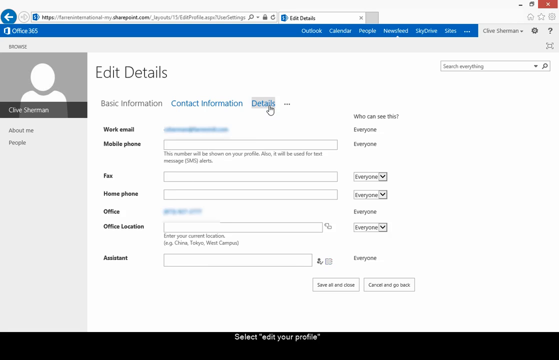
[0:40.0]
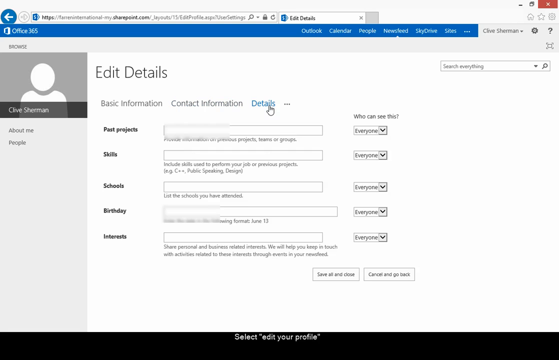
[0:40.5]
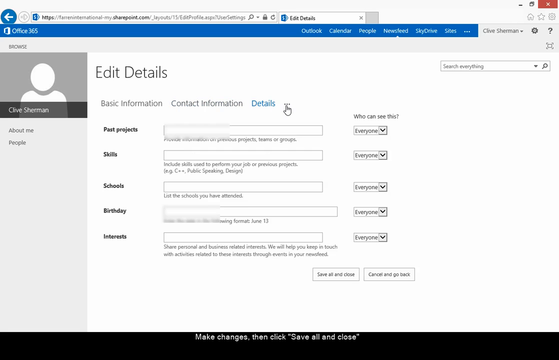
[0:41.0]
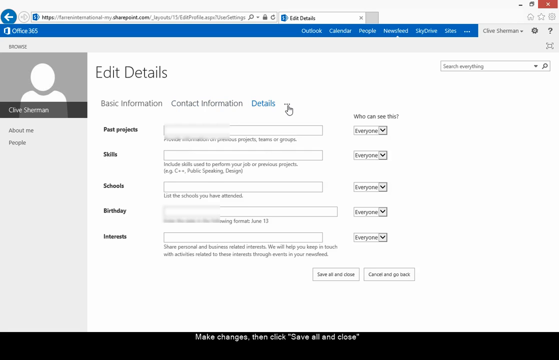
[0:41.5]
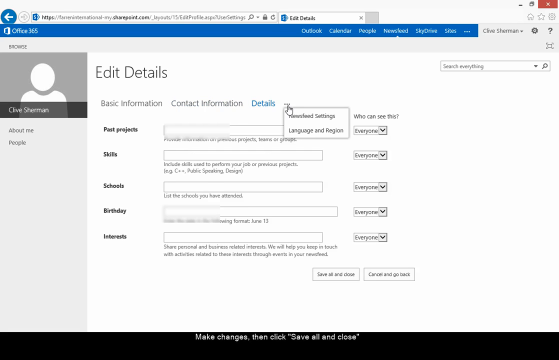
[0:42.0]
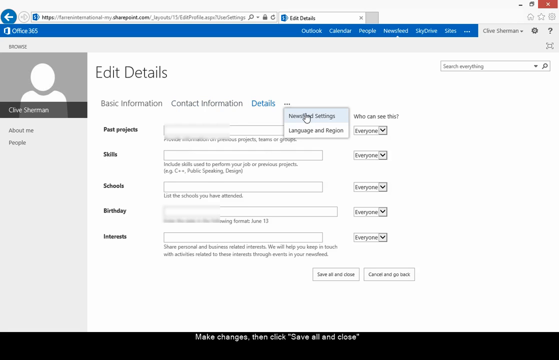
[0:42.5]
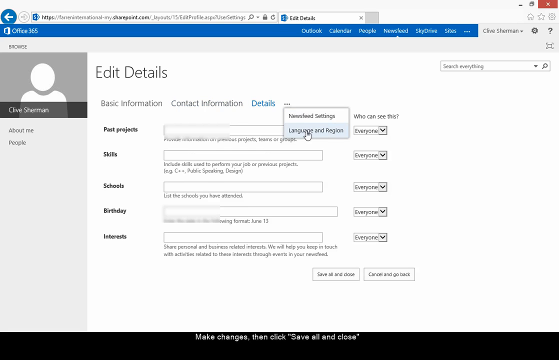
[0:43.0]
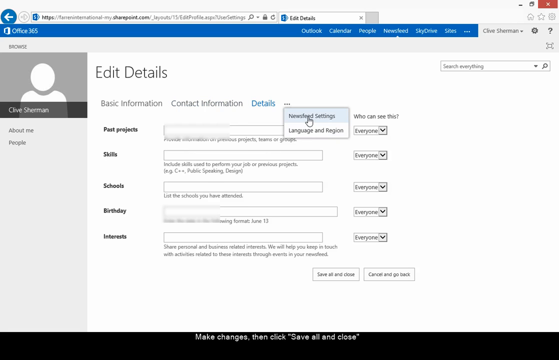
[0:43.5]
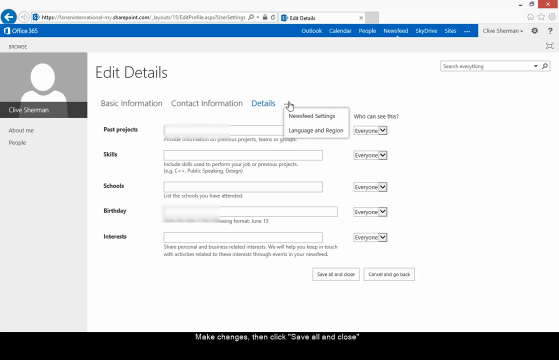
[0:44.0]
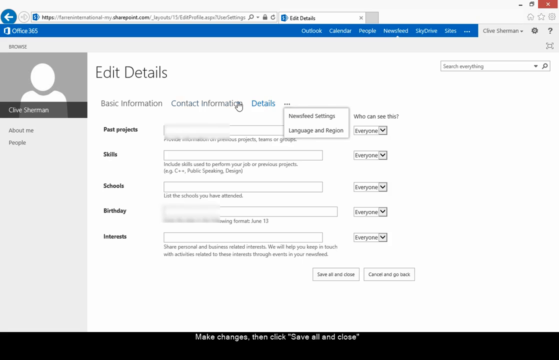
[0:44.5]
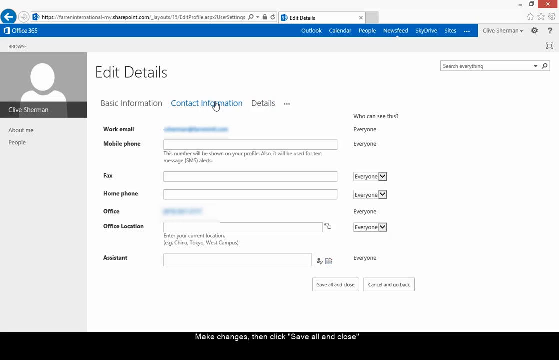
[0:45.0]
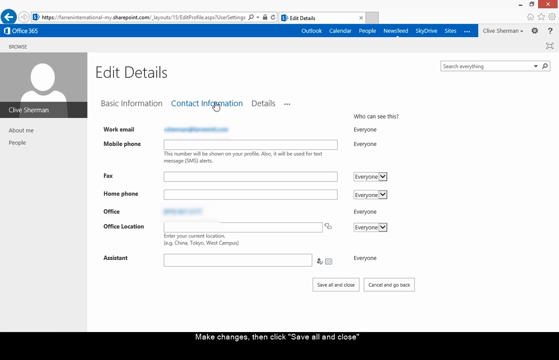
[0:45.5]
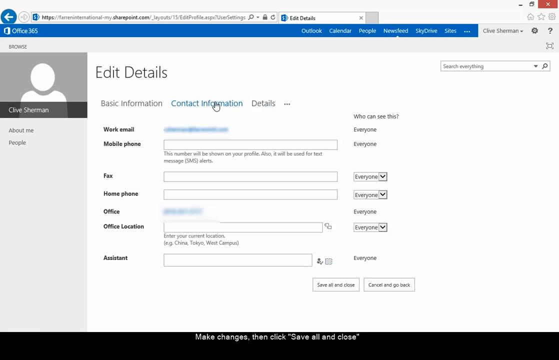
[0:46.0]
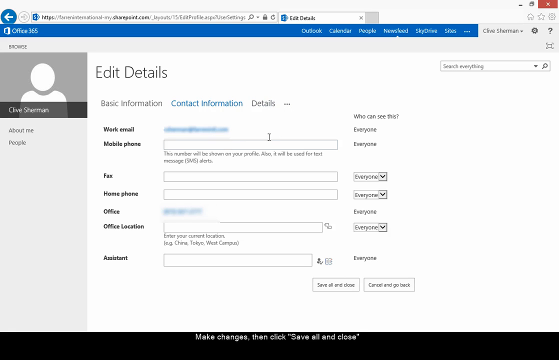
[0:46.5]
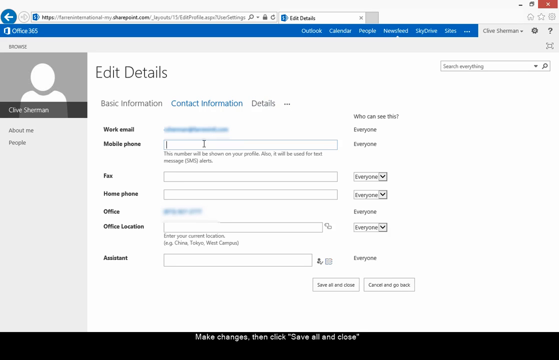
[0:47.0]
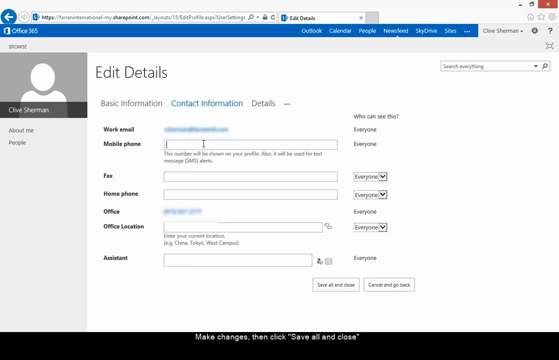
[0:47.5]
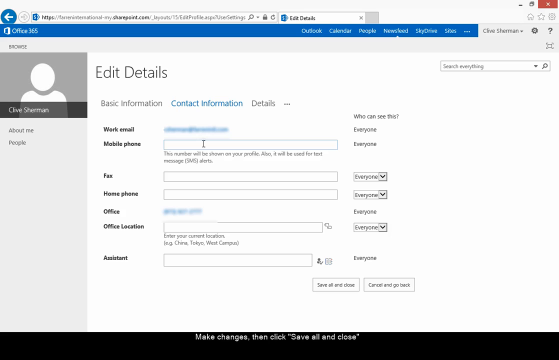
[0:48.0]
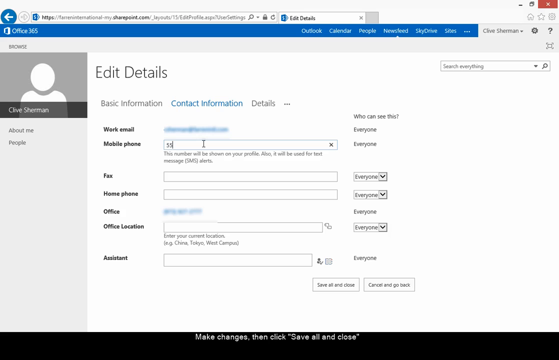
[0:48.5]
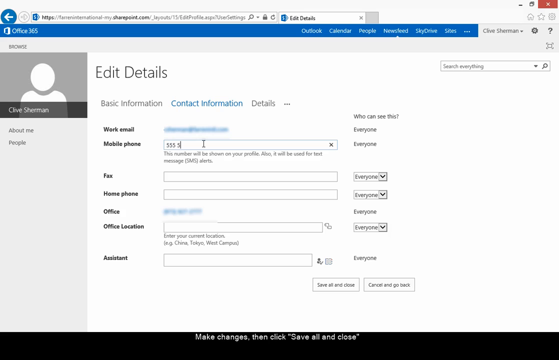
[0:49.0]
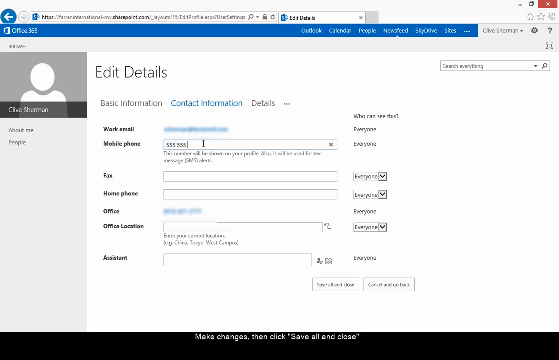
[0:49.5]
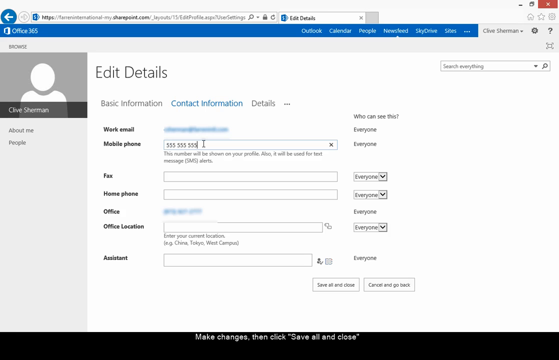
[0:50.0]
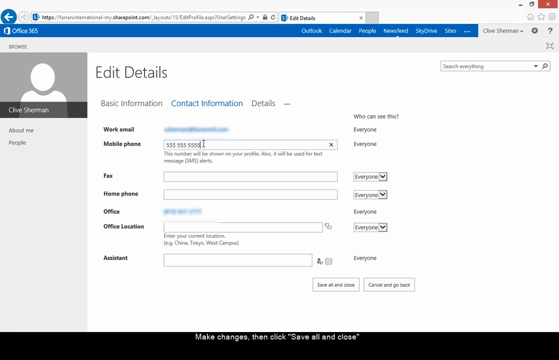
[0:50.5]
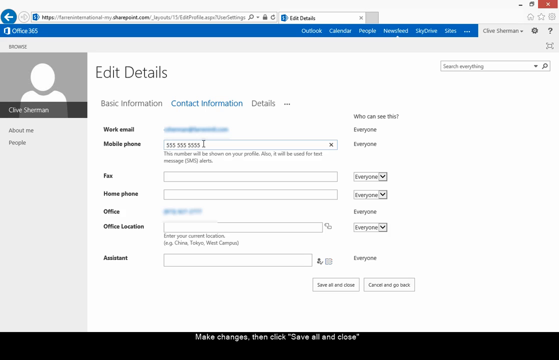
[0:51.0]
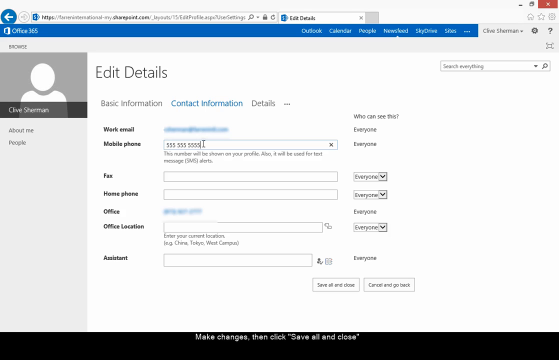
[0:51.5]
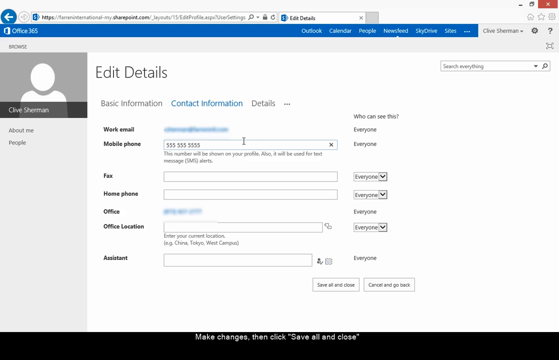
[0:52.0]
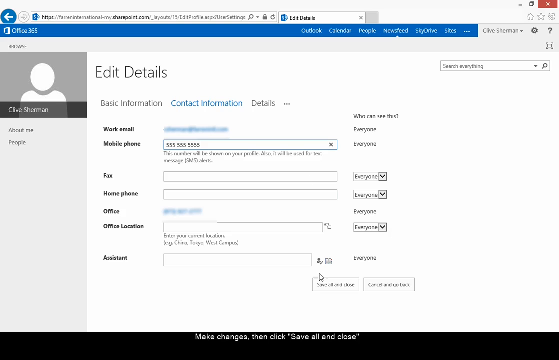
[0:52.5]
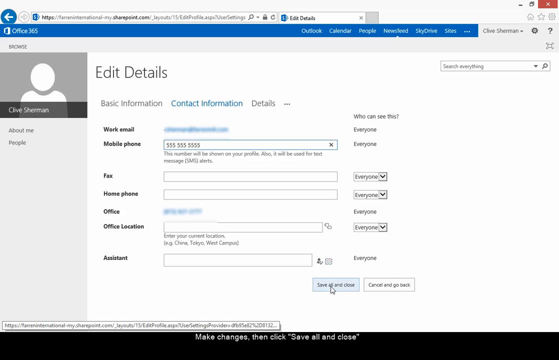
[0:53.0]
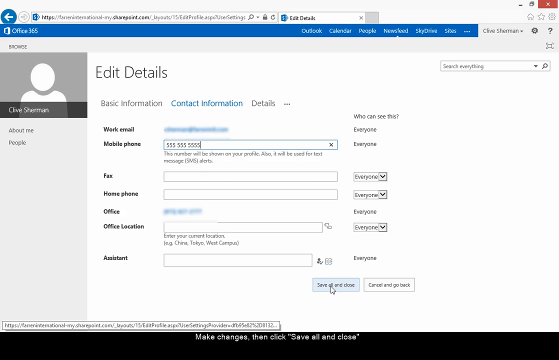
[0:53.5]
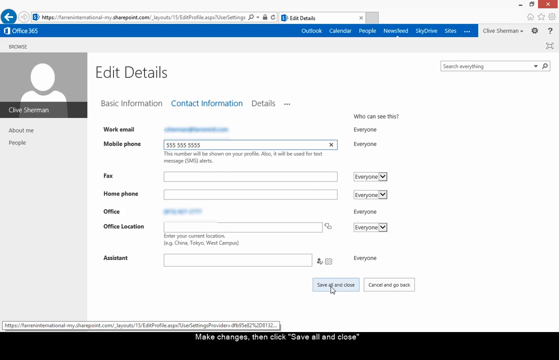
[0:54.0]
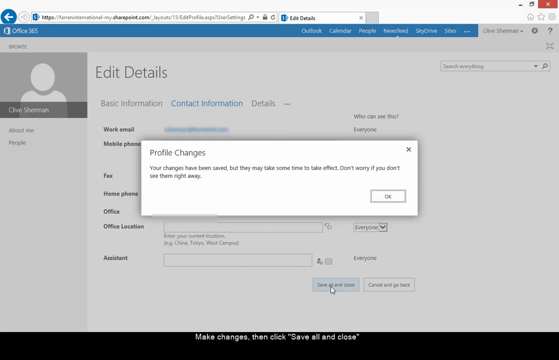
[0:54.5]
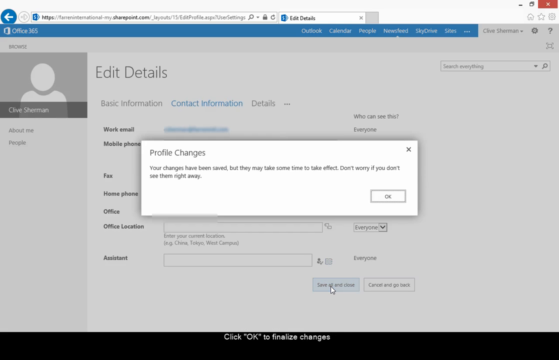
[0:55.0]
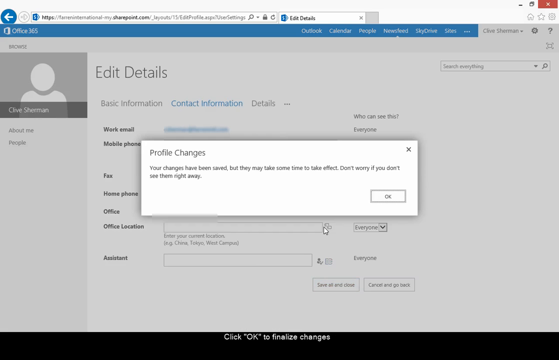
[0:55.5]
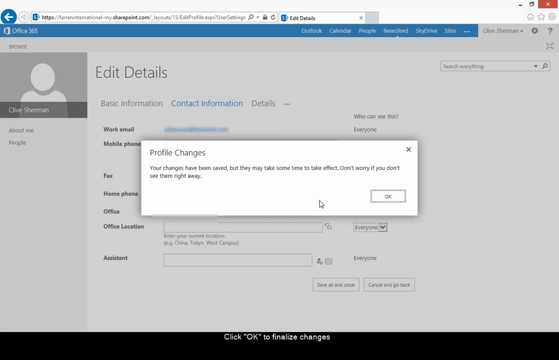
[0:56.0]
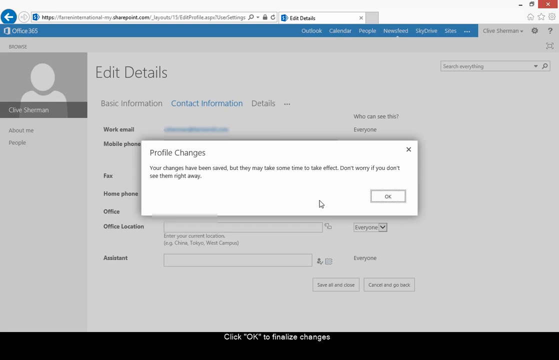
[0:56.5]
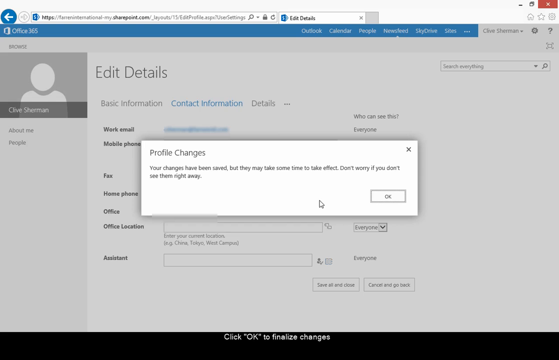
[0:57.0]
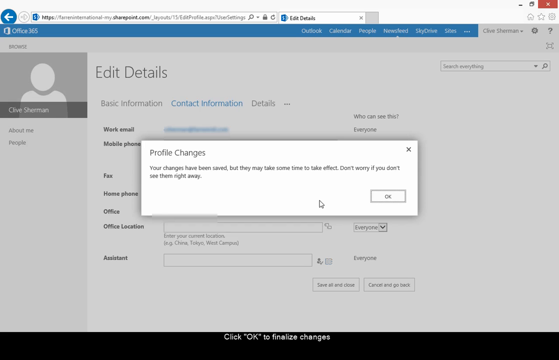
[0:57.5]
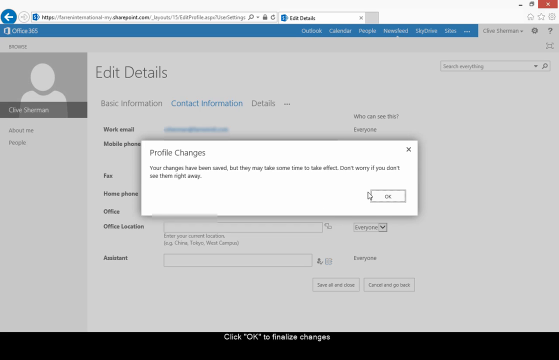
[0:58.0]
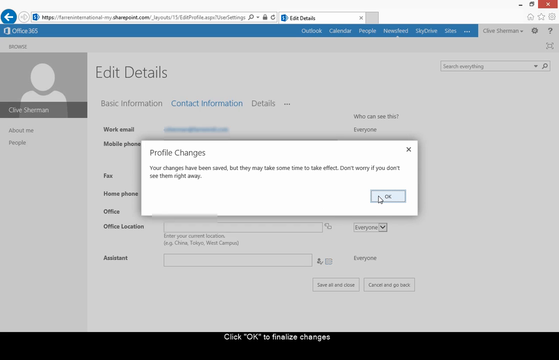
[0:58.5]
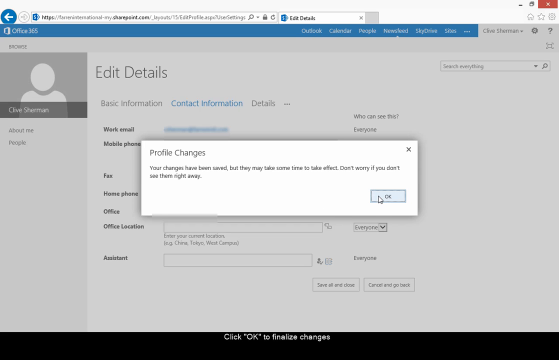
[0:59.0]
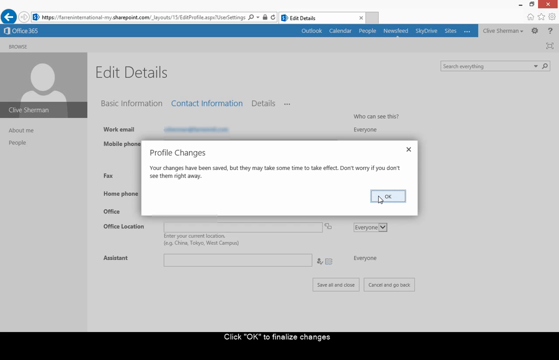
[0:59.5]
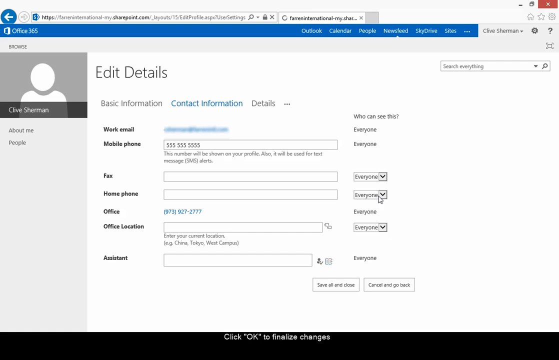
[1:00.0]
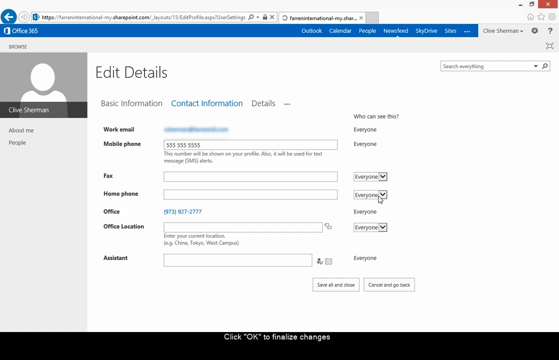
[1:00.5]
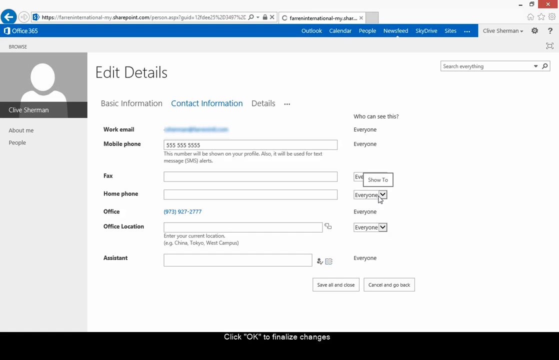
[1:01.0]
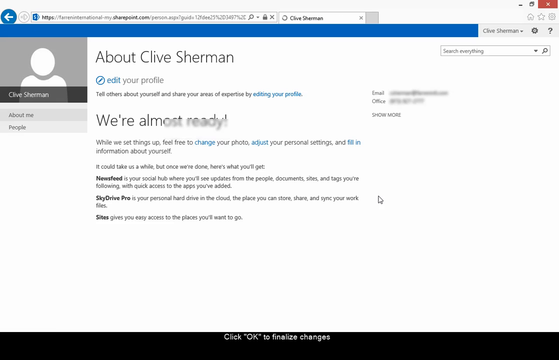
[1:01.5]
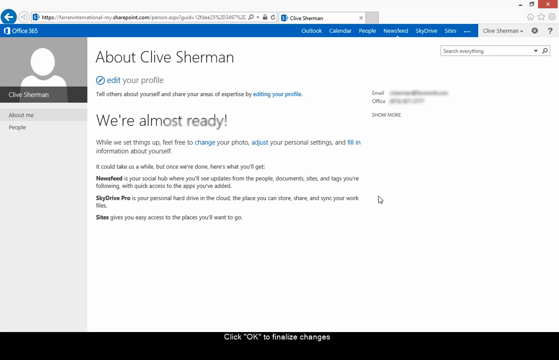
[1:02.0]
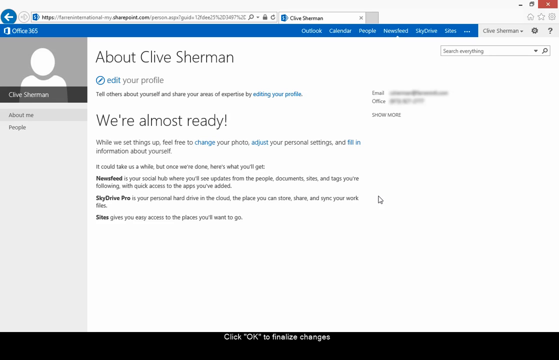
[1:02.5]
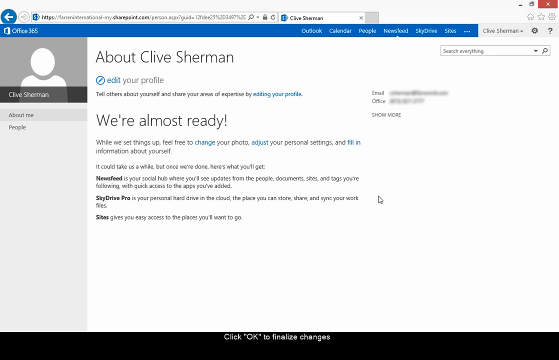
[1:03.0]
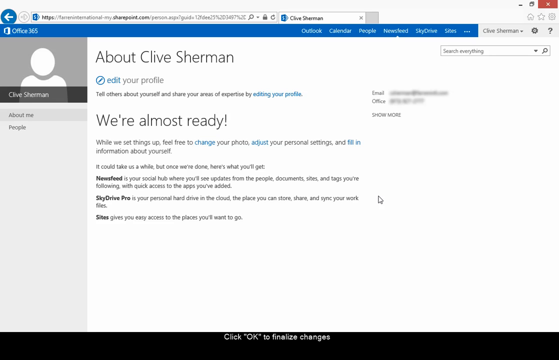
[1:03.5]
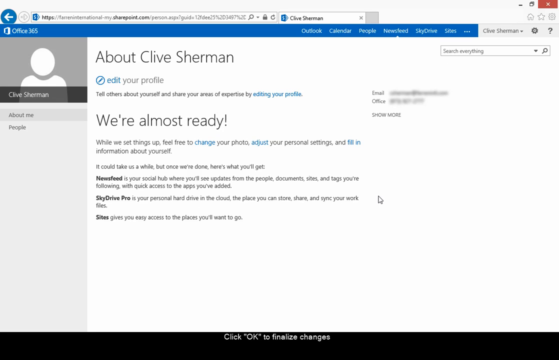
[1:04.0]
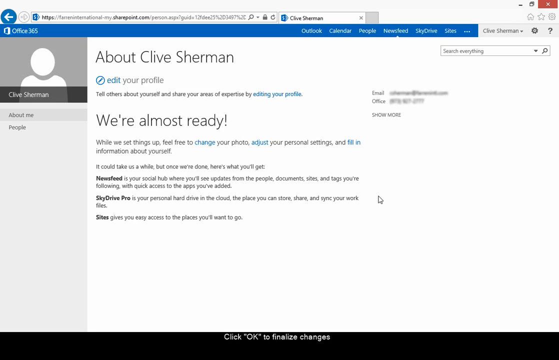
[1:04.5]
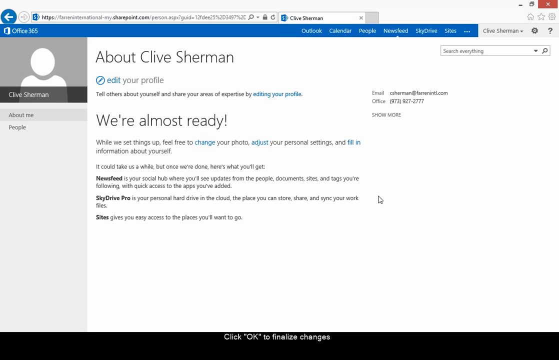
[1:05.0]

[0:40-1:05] The edit details page for Clive Sherman is on screen. He clicks details and then the three little dots next to it, but then goes back to contact information. The page has fields for work email, mobile phone, fax, home phone, office, office location and assistant, and he enters his mobile phone number. He clicks save, and a message pops up reading "profile changes. Your changes has been saved, but they may take some time to take effect. Don't worry if you don't see them right away." He clicks okay, goes back to the start of the edit page, and clicks it again.